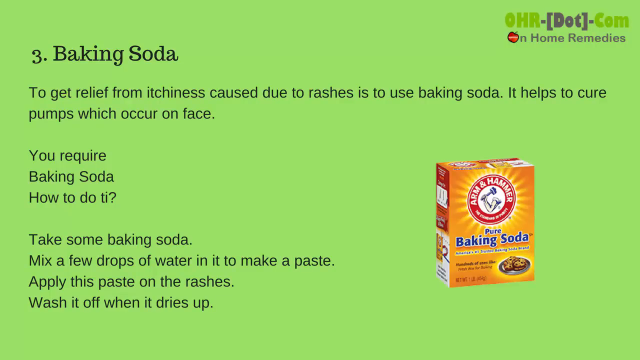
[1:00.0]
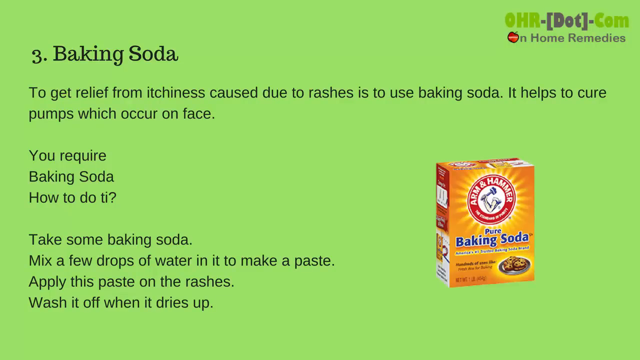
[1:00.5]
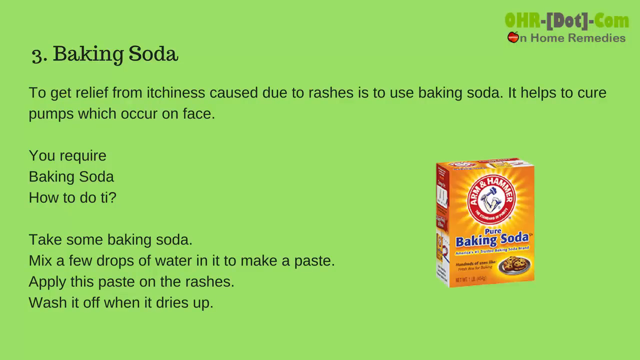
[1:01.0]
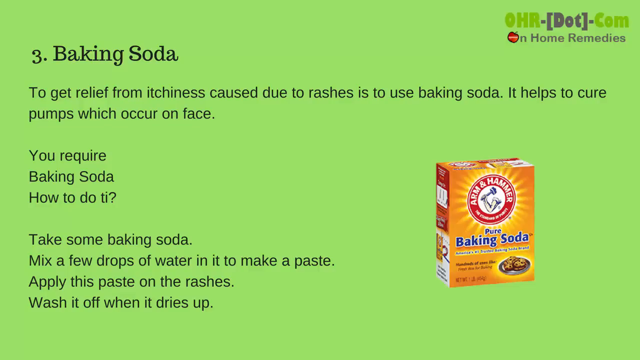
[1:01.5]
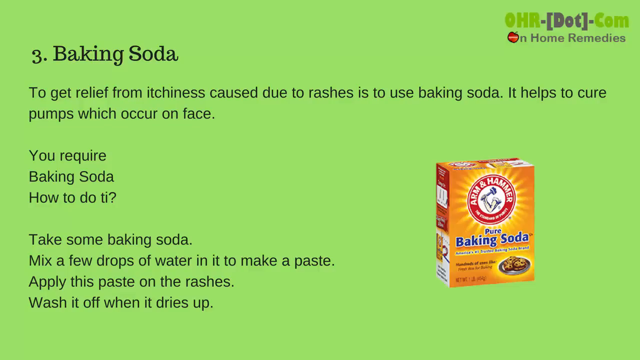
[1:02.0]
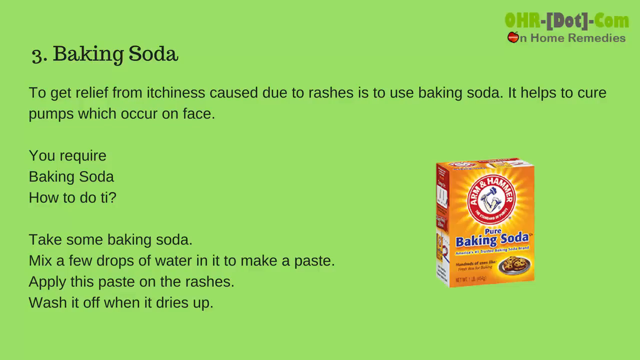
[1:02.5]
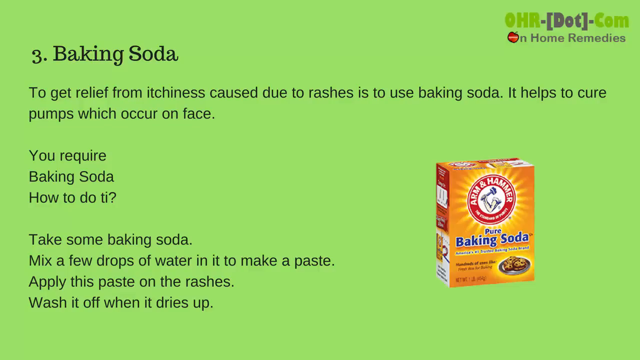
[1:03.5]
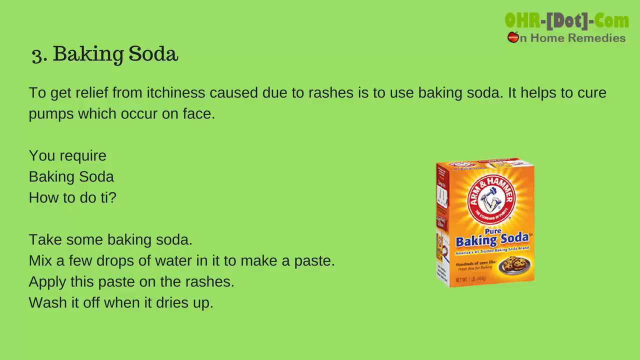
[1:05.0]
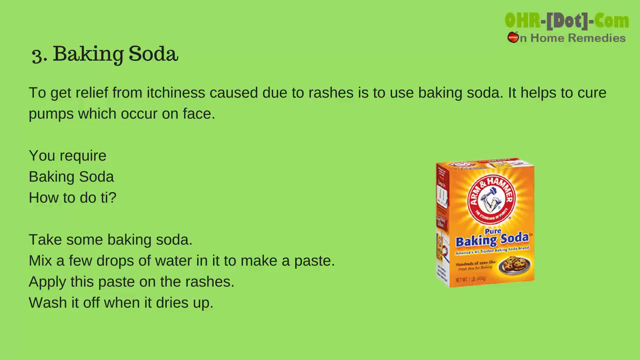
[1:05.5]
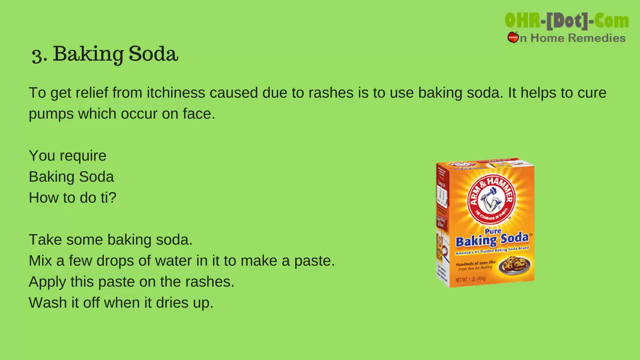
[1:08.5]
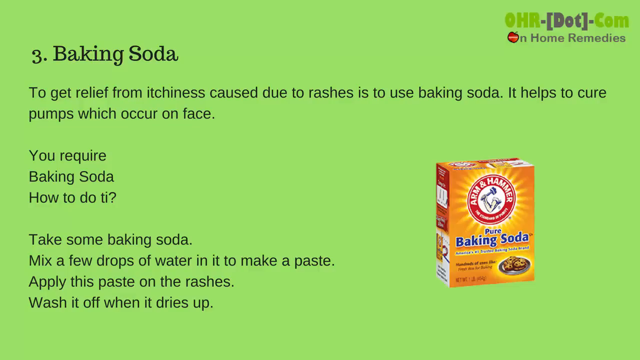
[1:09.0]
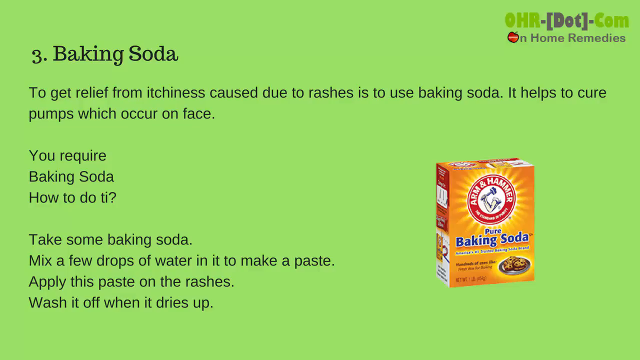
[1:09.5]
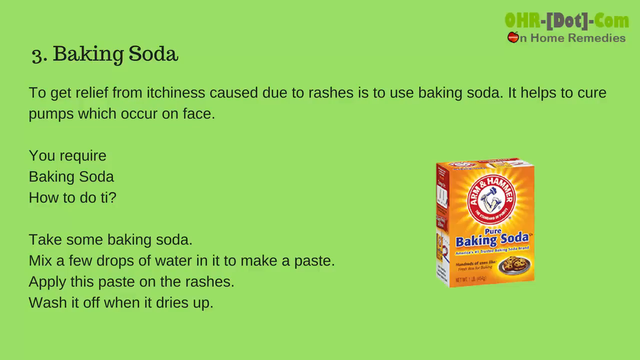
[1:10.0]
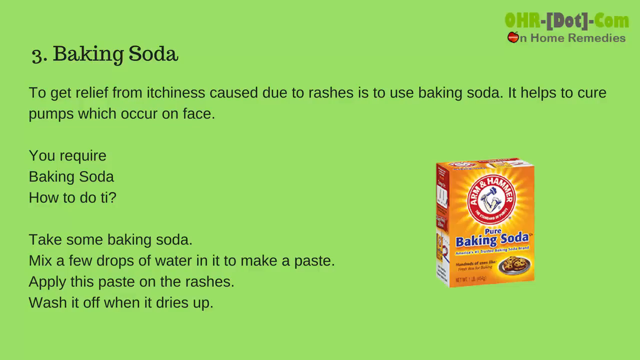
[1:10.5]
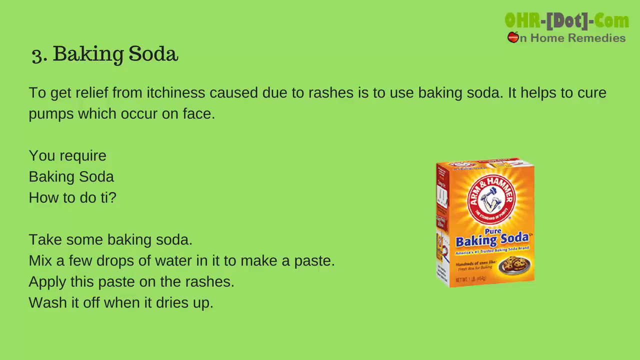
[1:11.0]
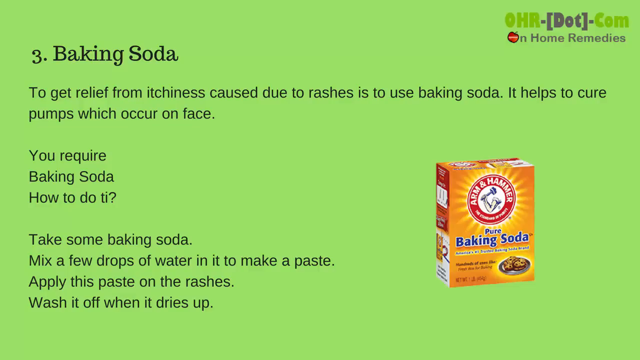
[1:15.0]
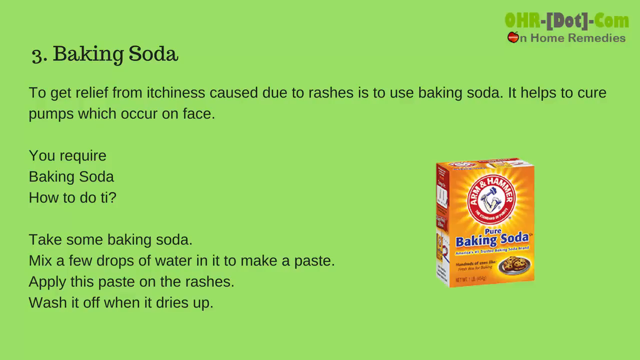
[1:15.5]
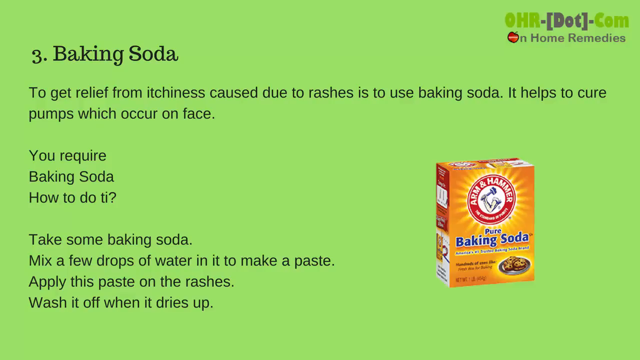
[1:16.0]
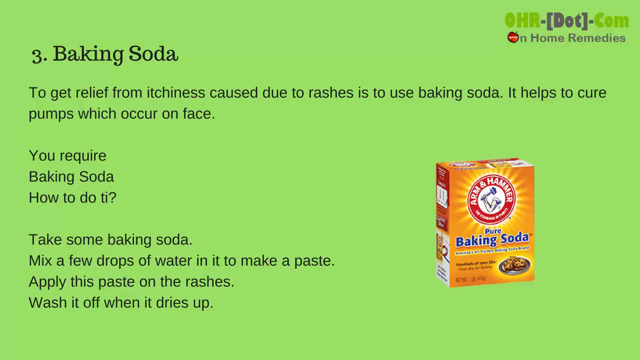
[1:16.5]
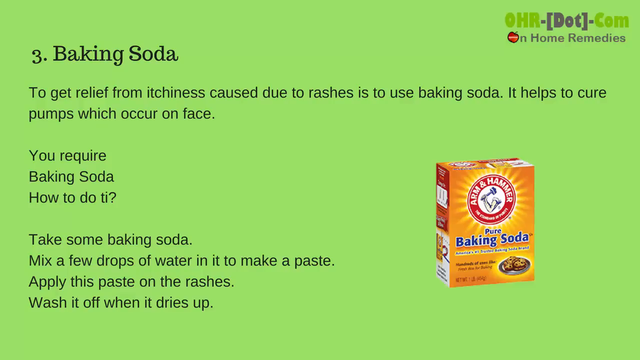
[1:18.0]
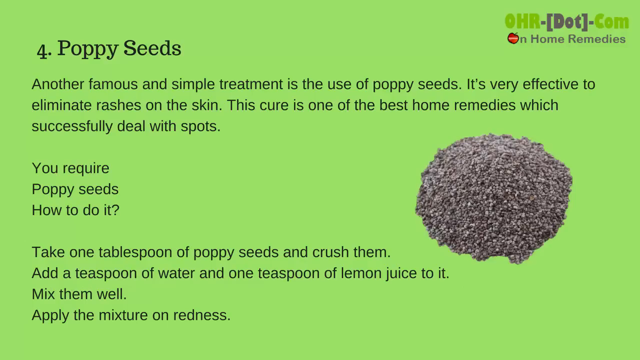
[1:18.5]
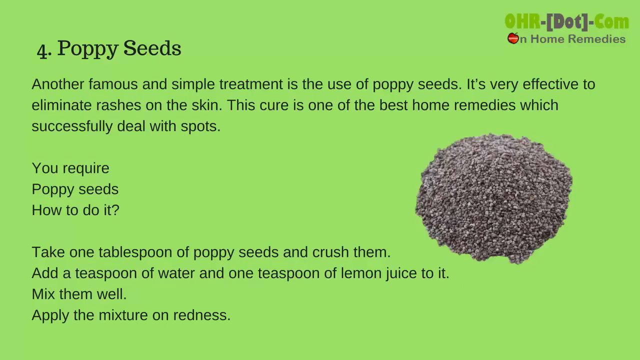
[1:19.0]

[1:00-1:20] The next slide is home remedy number three, baking soda, designed by OHRA.com. It lists that baking soda is required and explains how to do it: take some baking soda, mix a few drops of water into it to make a paste, and apply it to the rashes on the face. A box container designed in blue and red is shown.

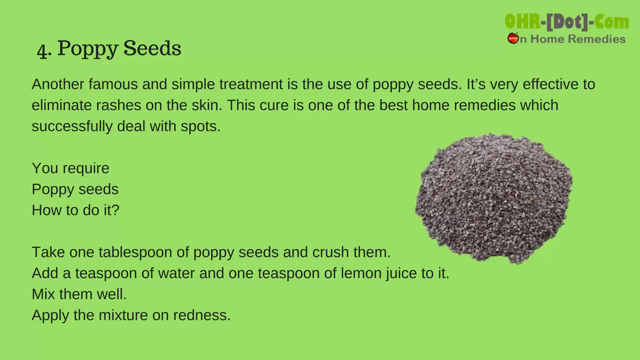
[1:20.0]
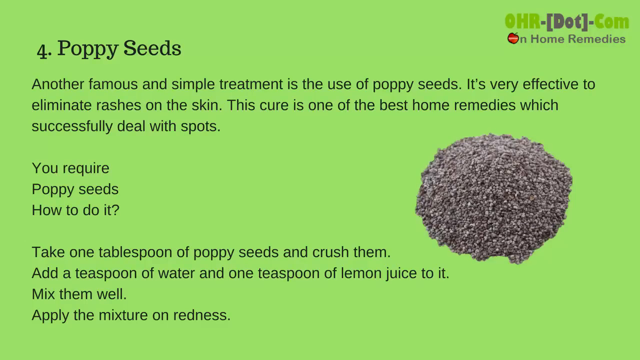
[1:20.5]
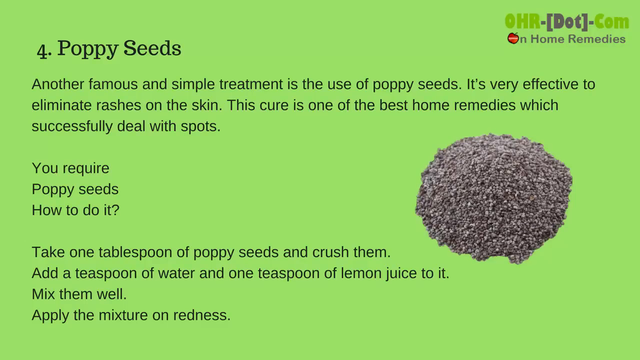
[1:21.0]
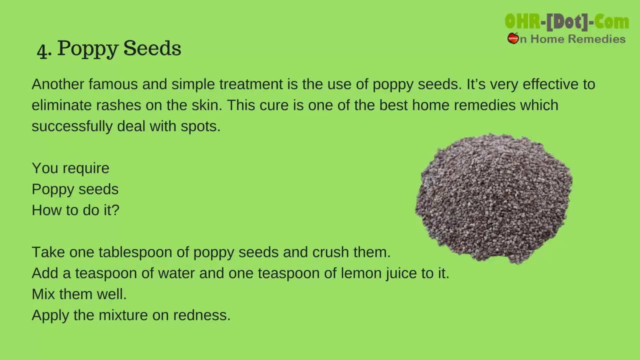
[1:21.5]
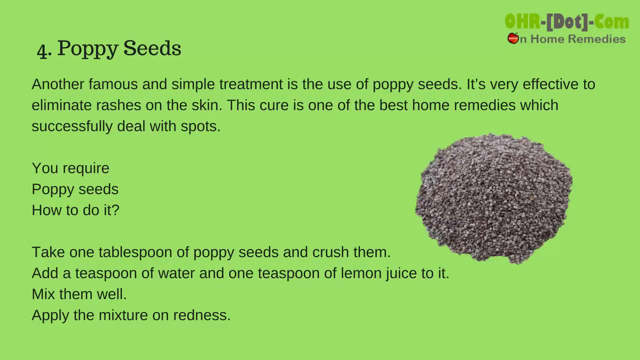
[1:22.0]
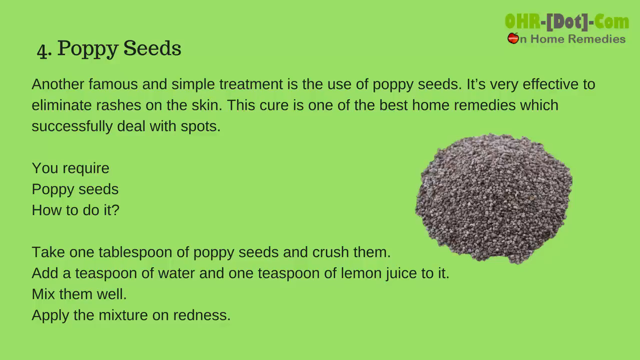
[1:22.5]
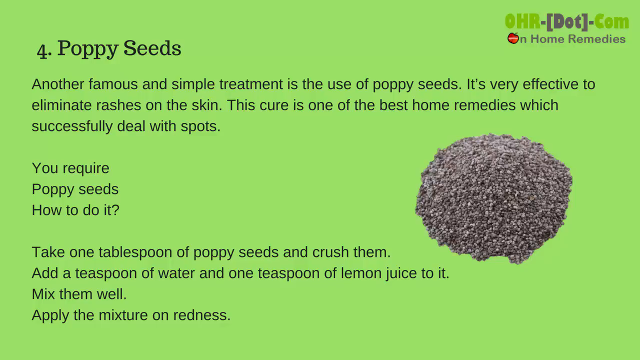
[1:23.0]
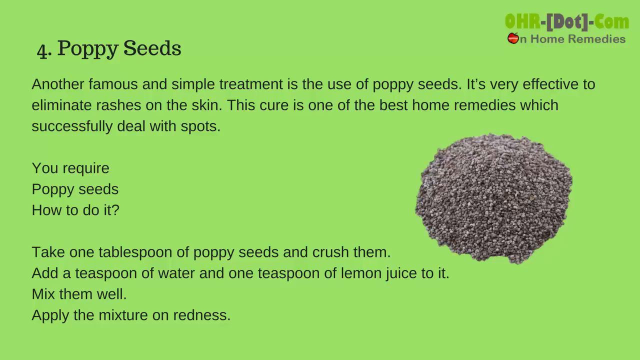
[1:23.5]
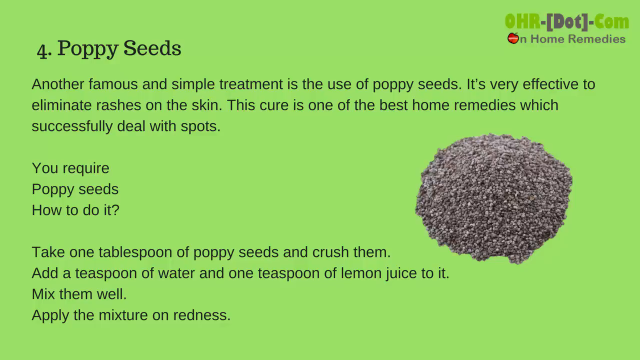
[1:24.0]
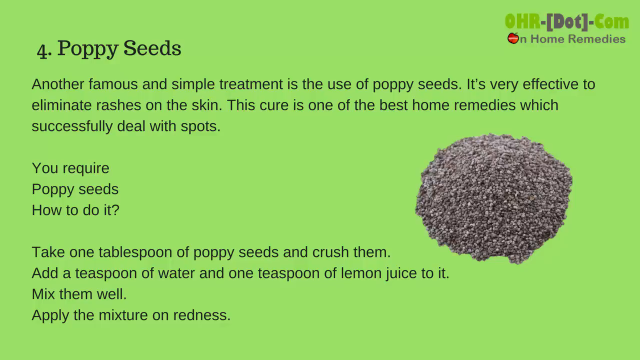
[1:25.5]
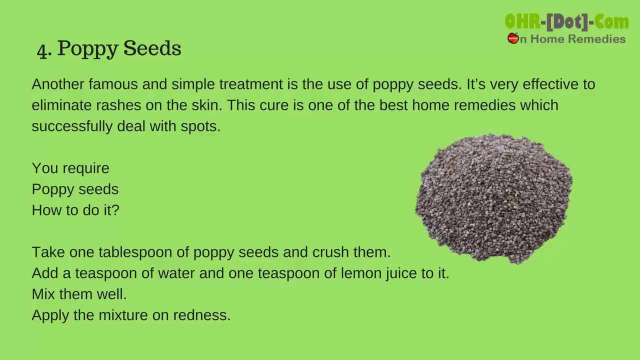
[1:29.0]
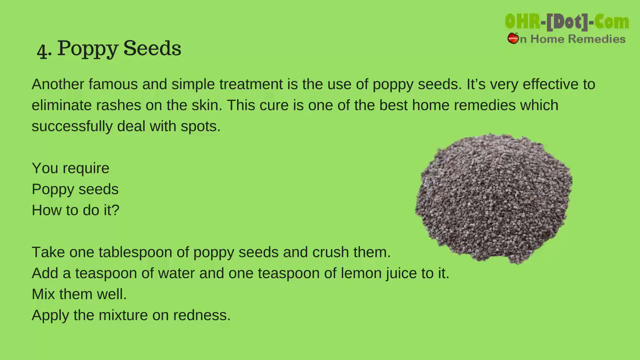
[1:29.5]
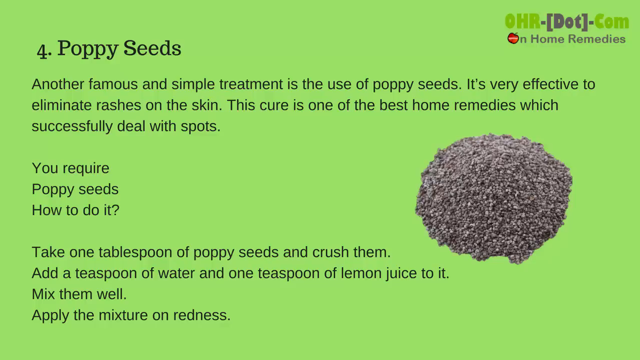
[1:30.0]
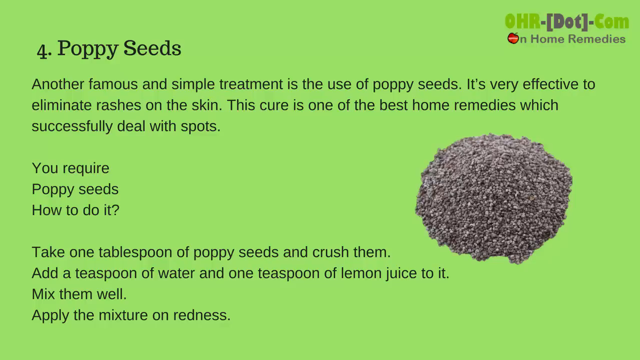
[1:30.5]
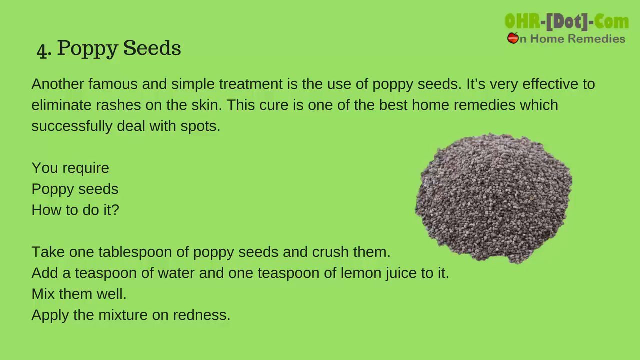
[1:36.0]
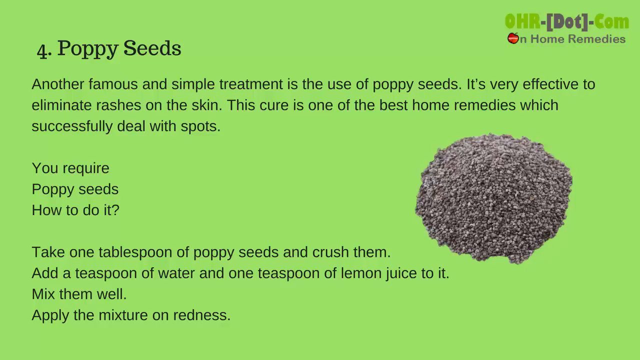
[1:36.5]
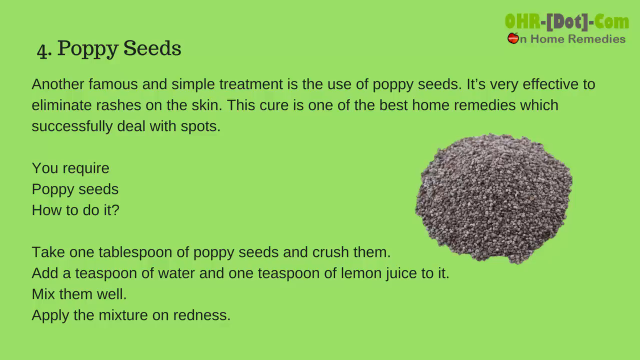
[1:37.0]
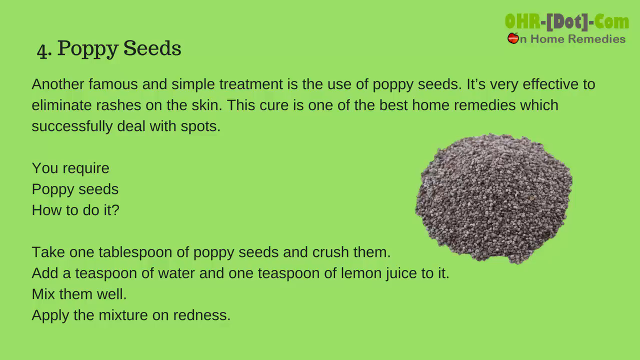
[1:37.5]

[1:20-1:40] Home remedy number four is pop seeds, presented as another famous and simple treatment and one of the best home remedies for spots. The text says pop seeds are required and explains how to use them: take one tablespoon of pop seeds and crush them, add a teaspoon of water and one teaspoon of lemon juice, mix well, and apply the mixture on the redness. The slide is powered by hra.com in home remedies and is designed in green. Pop seeds are shown, along with olive oil, which is yellow, and some black things.